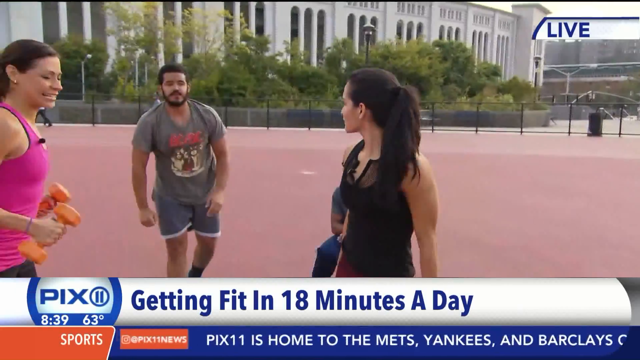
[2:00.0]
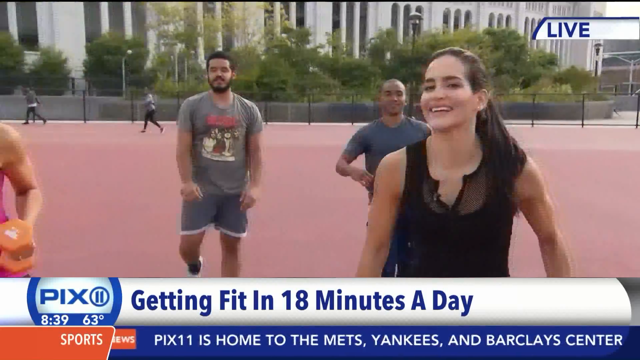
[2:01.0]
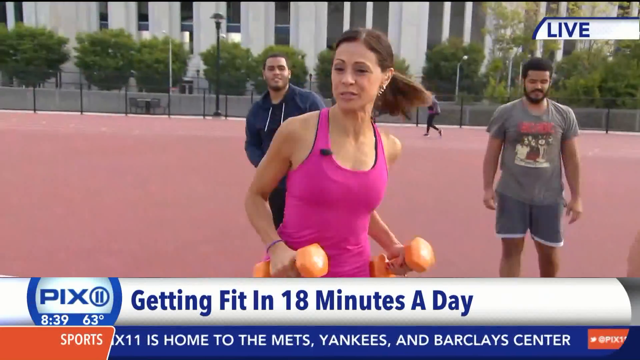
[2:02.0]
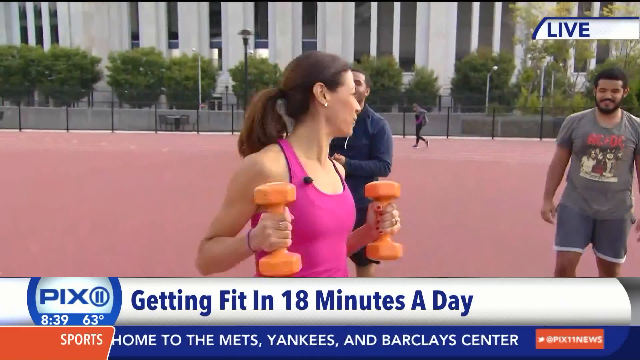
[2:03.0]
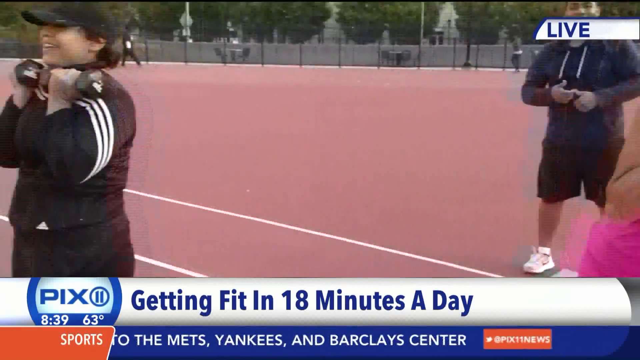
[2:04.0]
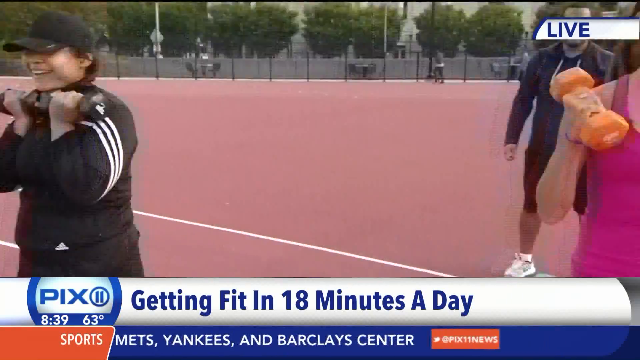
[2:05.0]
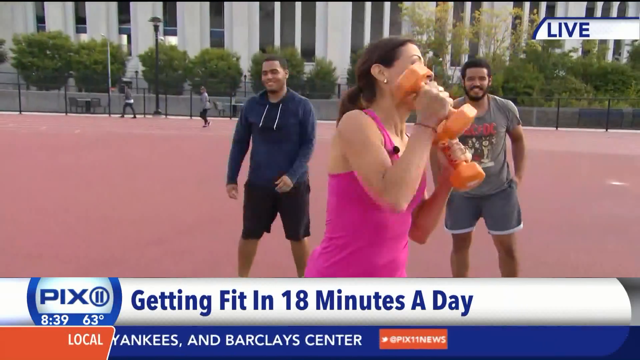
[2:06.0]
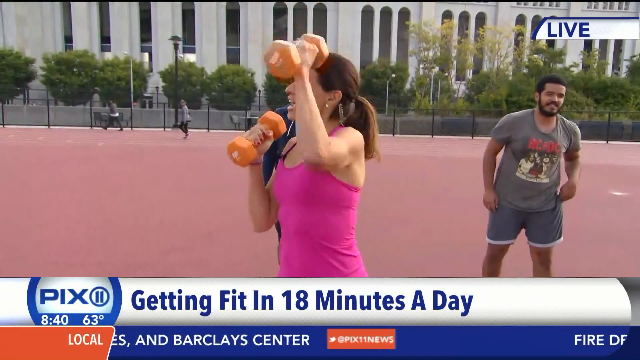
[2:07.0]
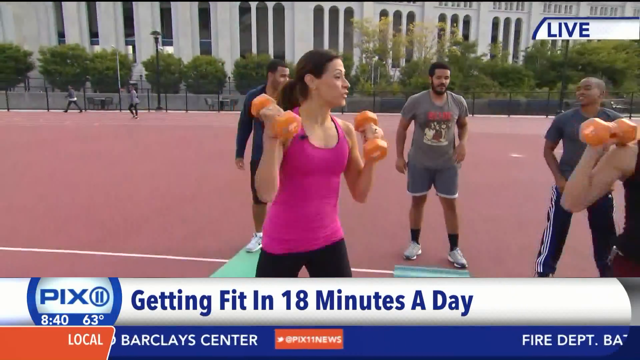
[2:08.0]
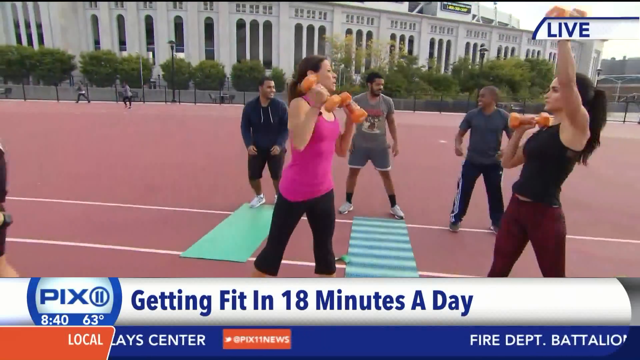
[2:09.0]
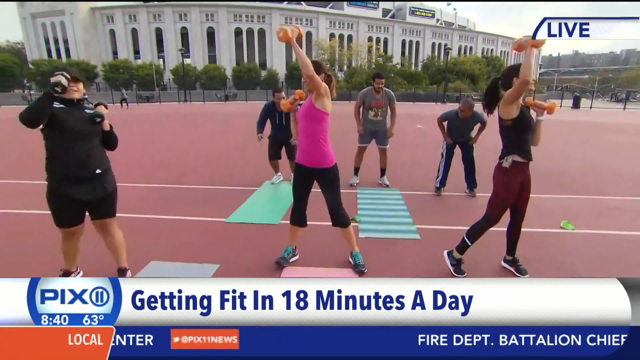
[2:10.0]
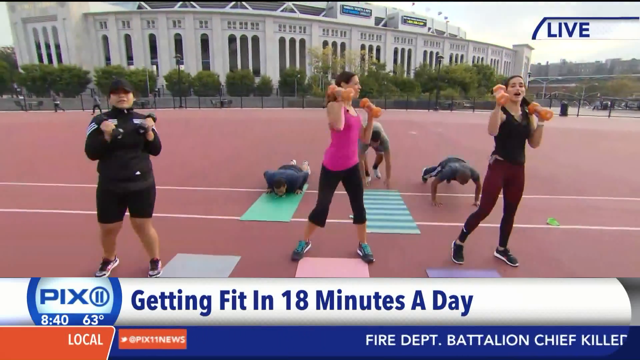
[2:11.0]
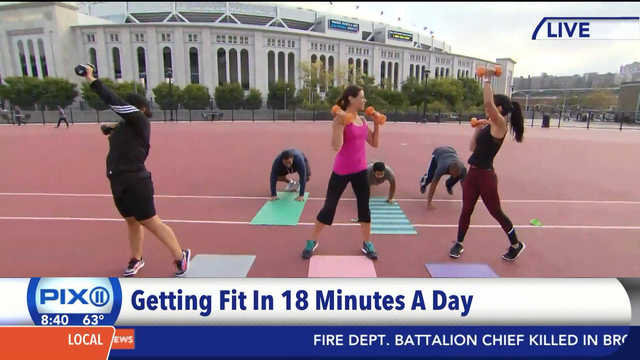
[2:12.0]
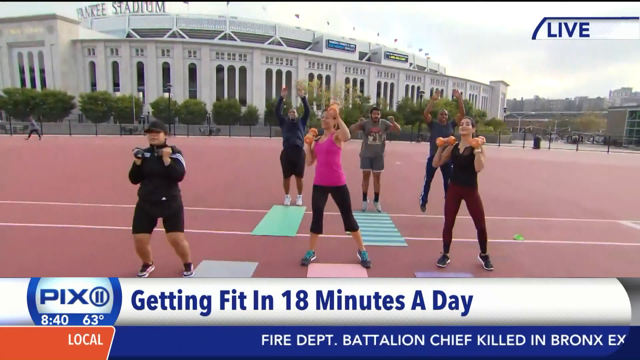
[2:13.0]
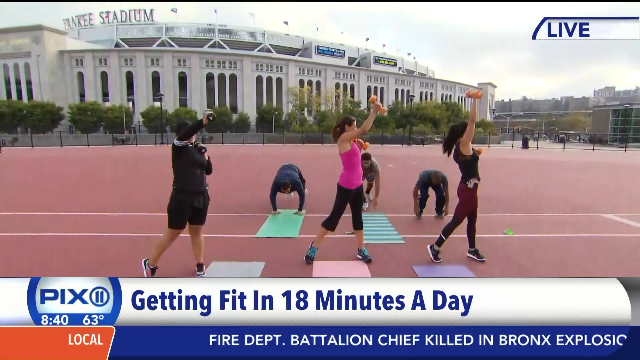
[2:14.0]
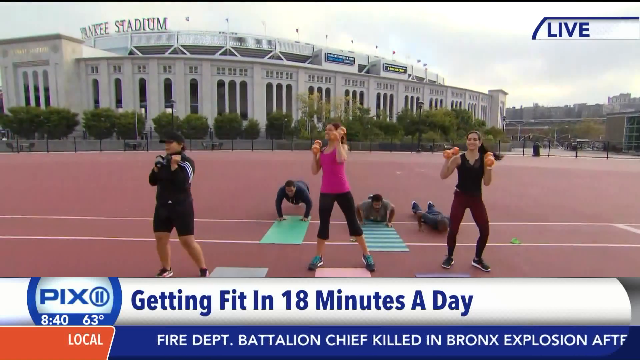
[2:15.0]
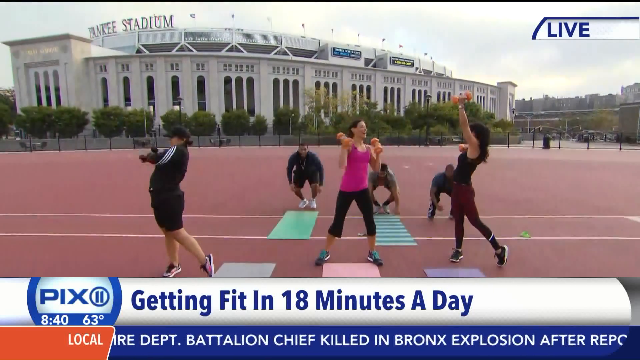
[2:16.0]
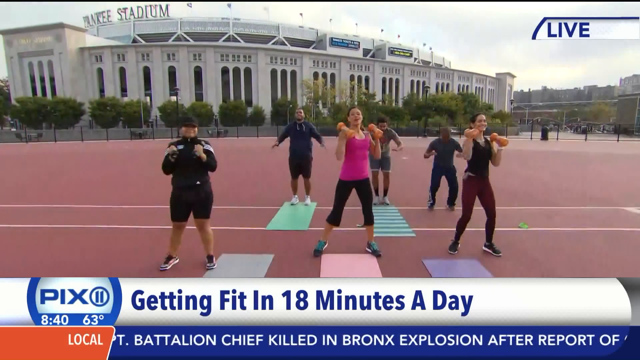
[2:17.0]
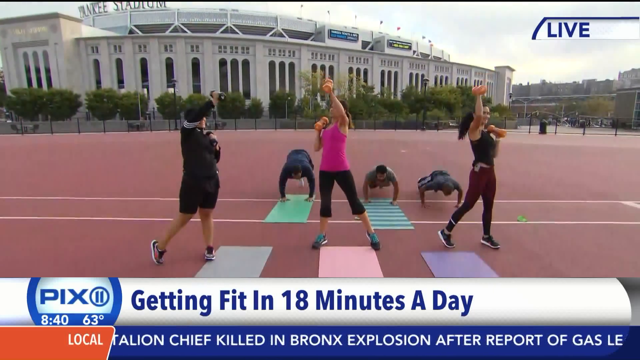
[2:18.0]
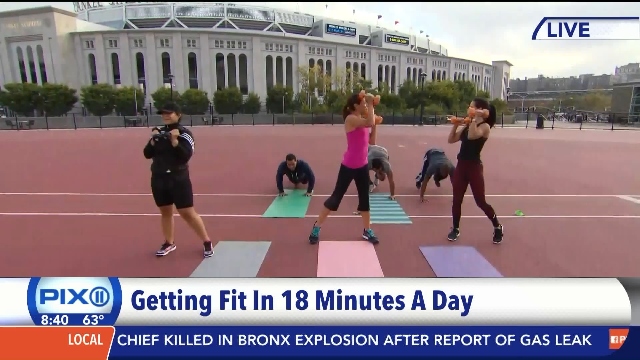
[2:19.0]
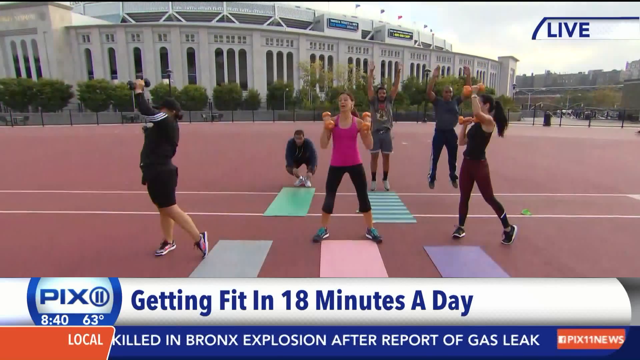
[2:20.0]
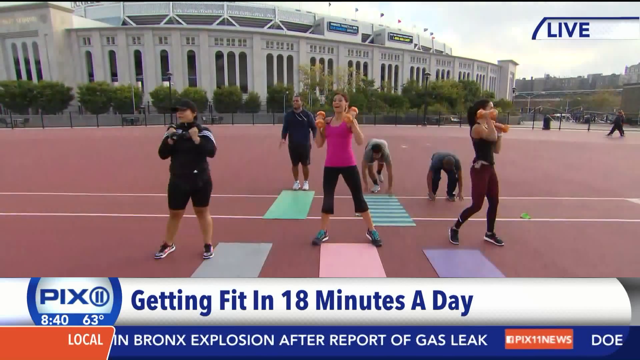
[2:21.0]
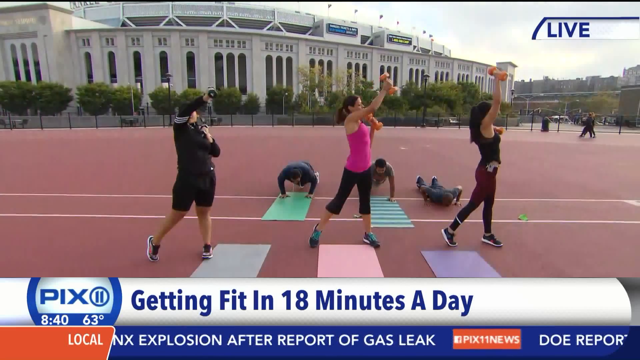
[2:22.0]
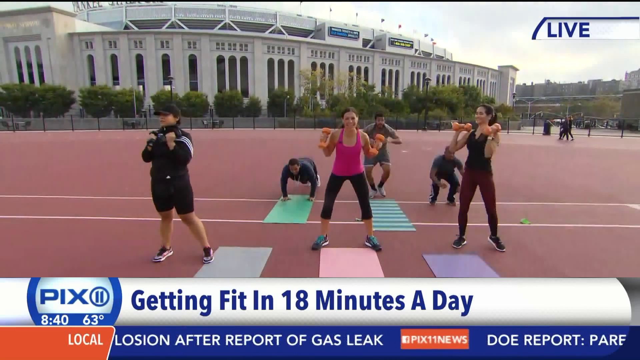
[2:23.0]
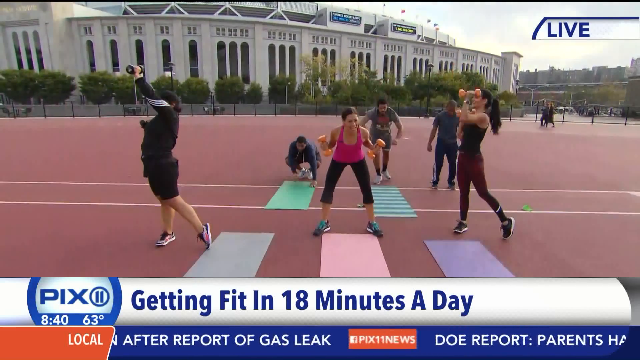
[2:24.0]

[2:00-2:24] The exercise continues in the park in the Bronx, but it has changed and is now done standing. A third person, in a black Adidas suit and a black hat, is filmed with people in the background; she laughs as she interacts with Elisa, who tries to explain the exercise: raising the hands, left and right, with dumbbells to tone the arm muscles. In the background, the three men who are with them do a different exercise, push-ups and then jumps. The segment ends with a sort of dance by Elisa before she says goodbye and the broadcast returns to the studio.